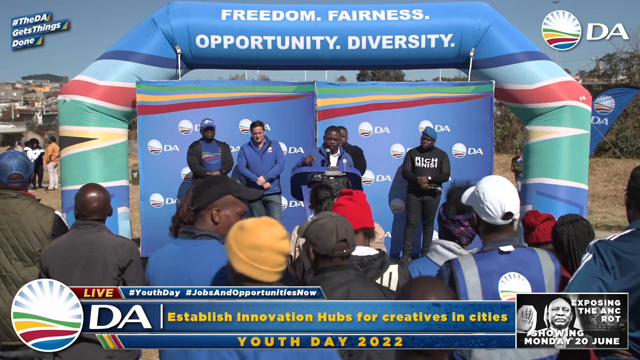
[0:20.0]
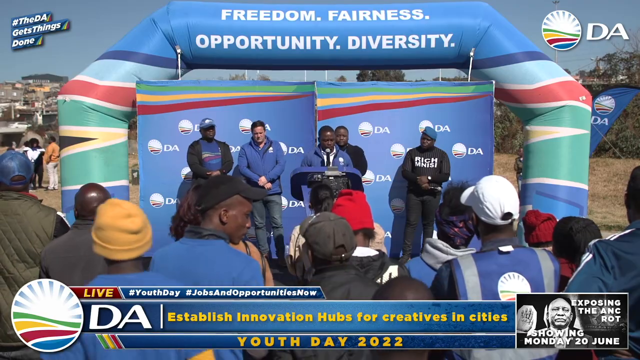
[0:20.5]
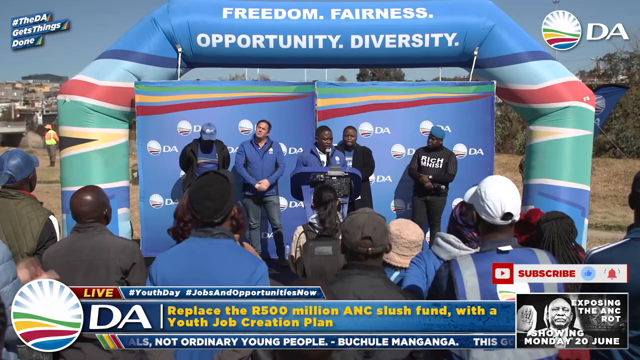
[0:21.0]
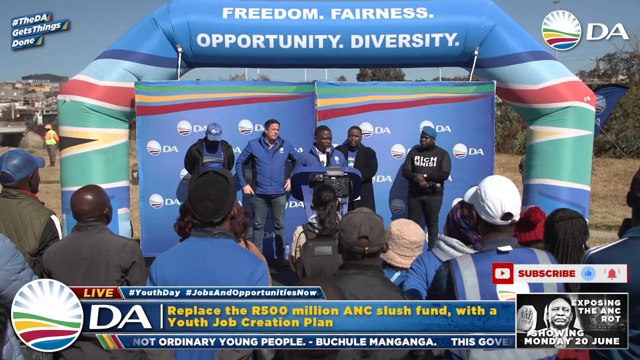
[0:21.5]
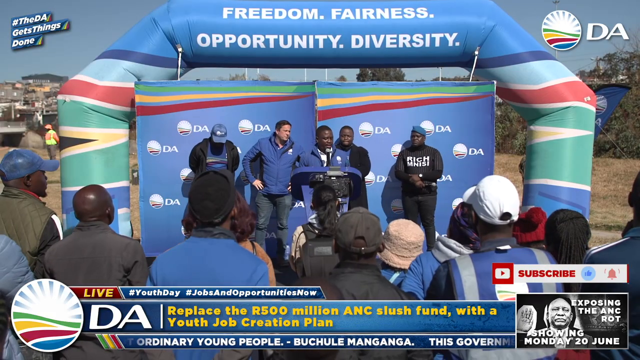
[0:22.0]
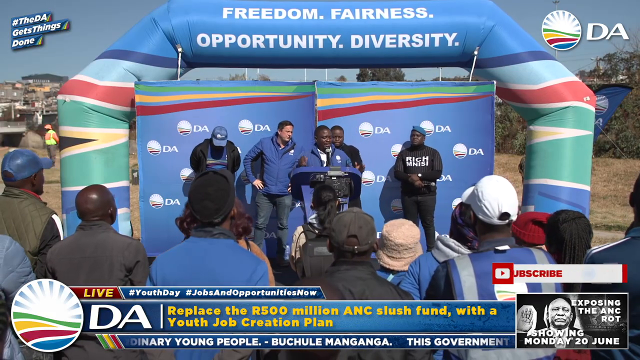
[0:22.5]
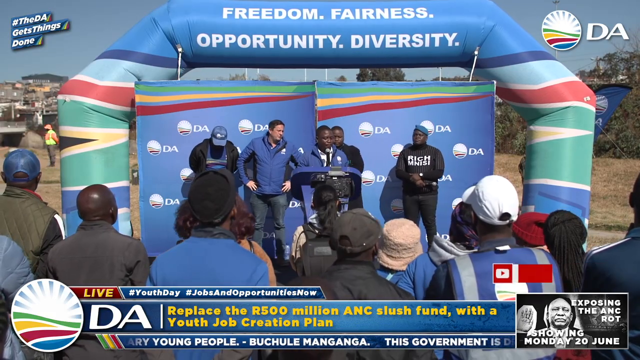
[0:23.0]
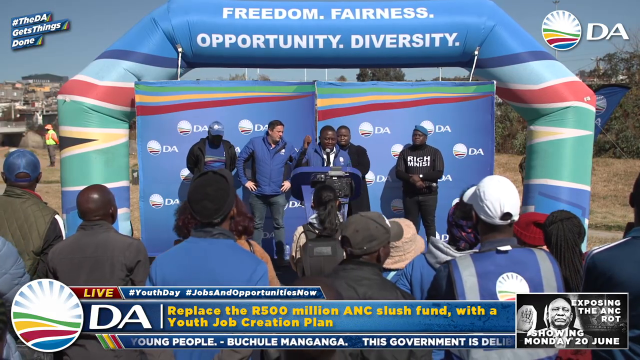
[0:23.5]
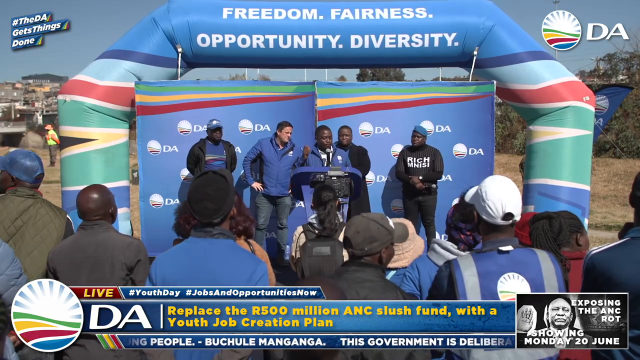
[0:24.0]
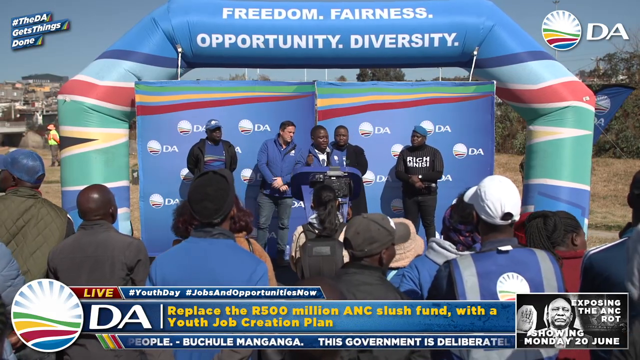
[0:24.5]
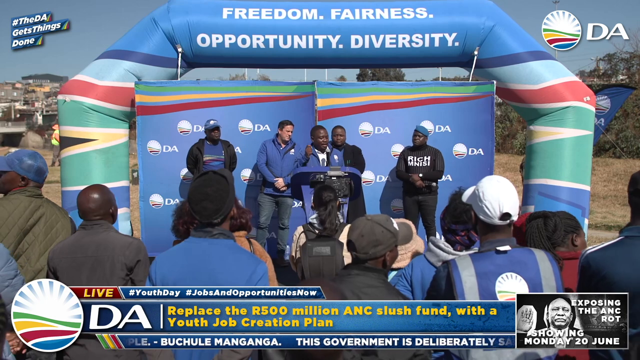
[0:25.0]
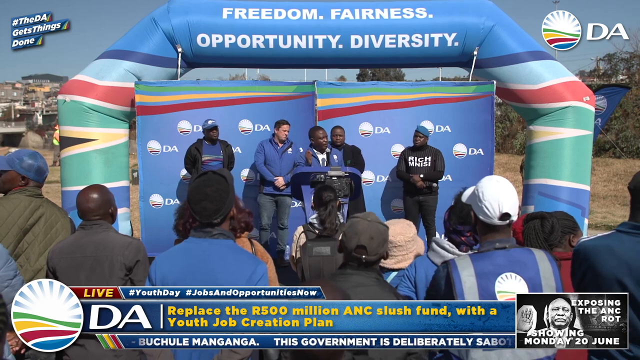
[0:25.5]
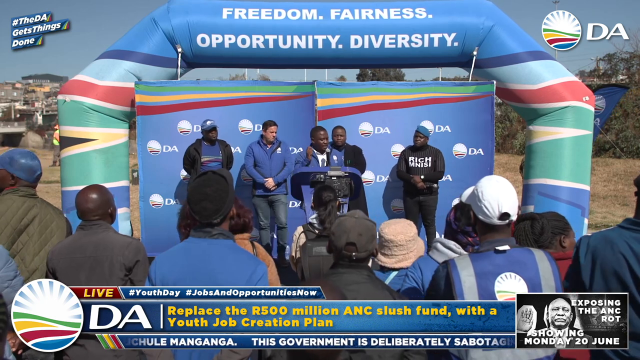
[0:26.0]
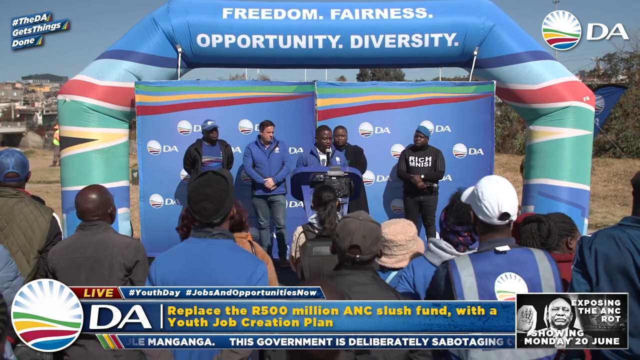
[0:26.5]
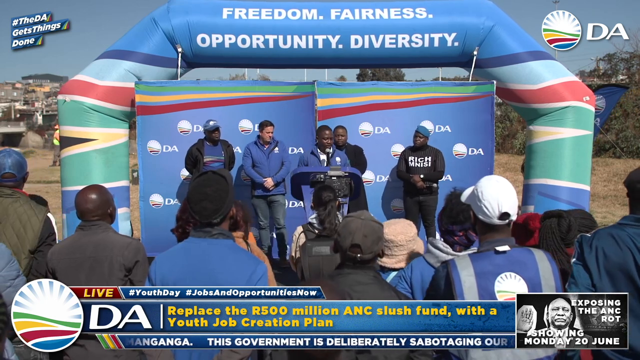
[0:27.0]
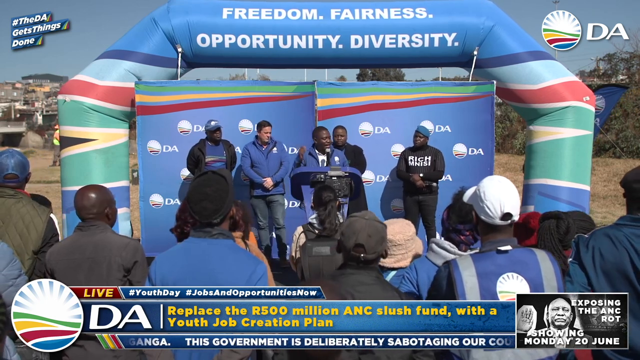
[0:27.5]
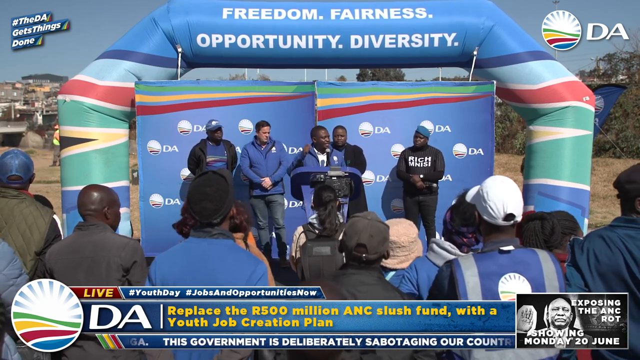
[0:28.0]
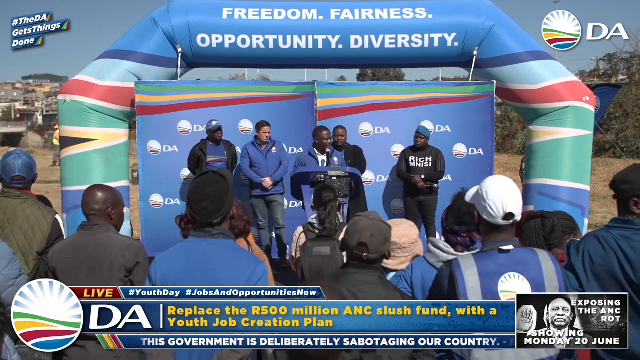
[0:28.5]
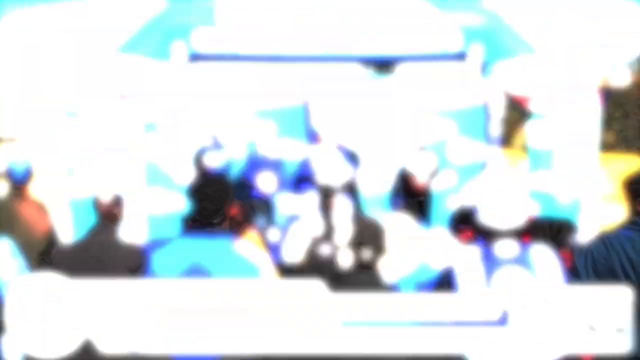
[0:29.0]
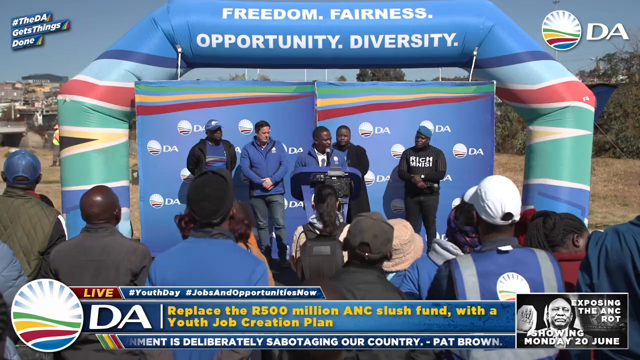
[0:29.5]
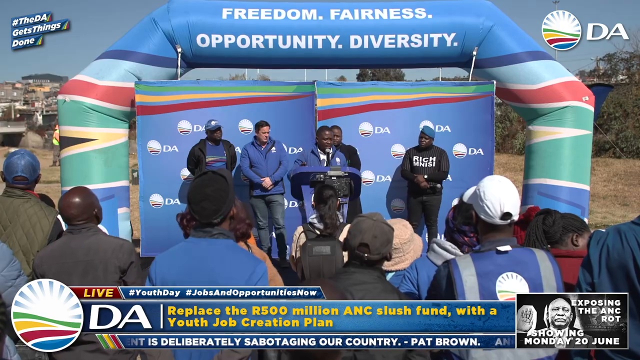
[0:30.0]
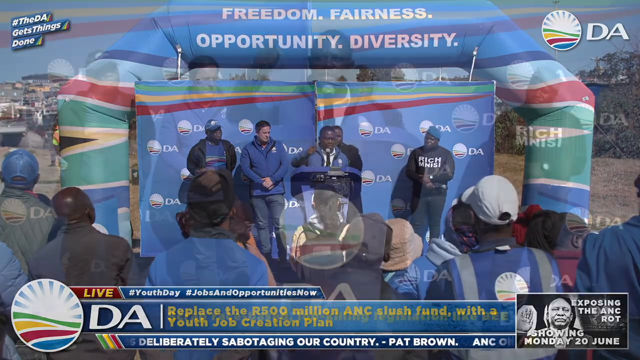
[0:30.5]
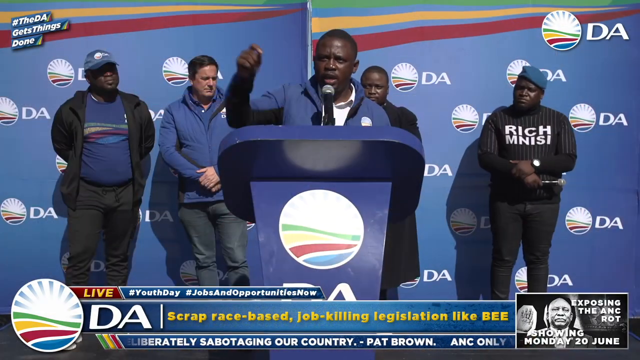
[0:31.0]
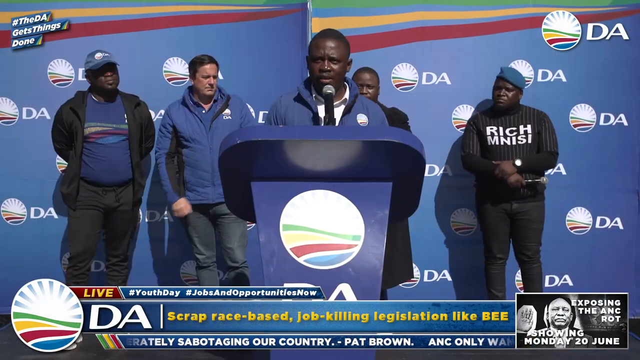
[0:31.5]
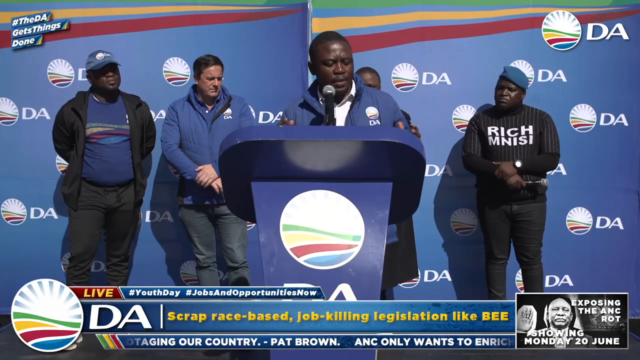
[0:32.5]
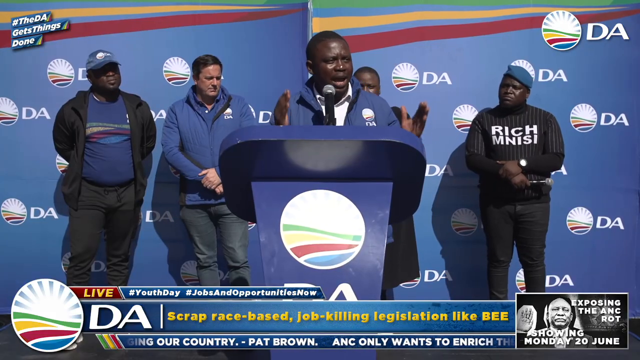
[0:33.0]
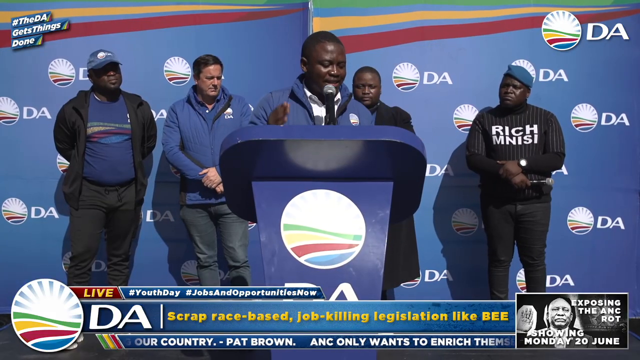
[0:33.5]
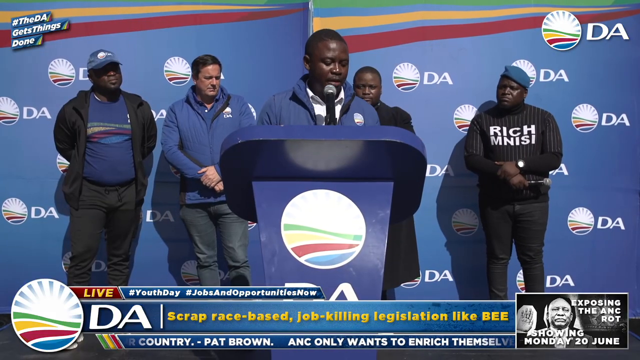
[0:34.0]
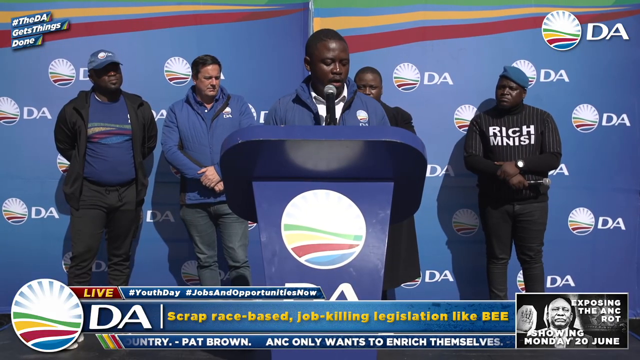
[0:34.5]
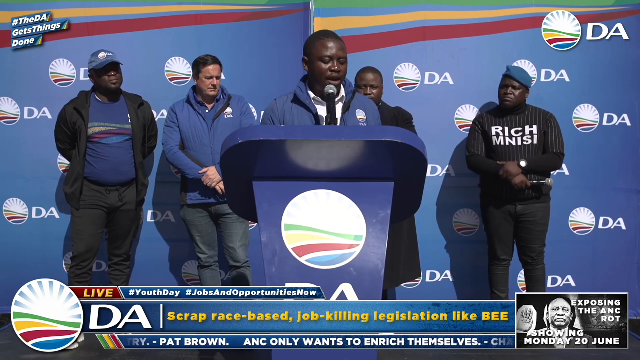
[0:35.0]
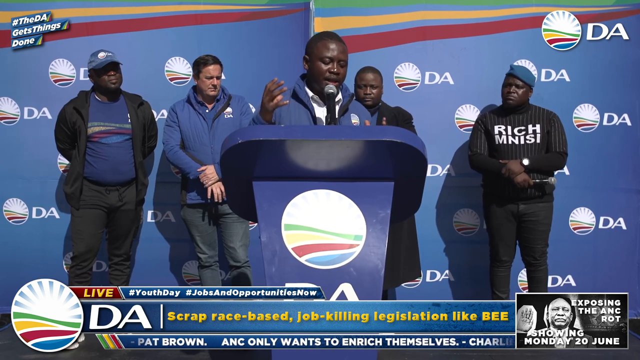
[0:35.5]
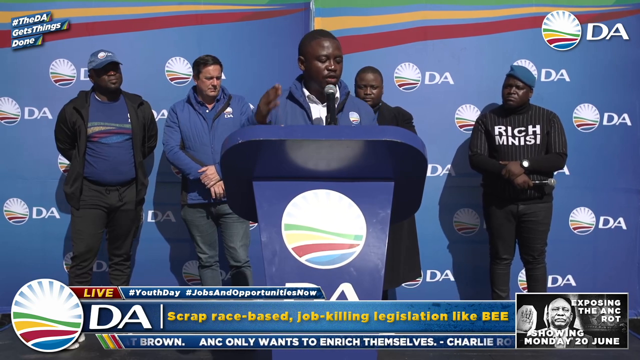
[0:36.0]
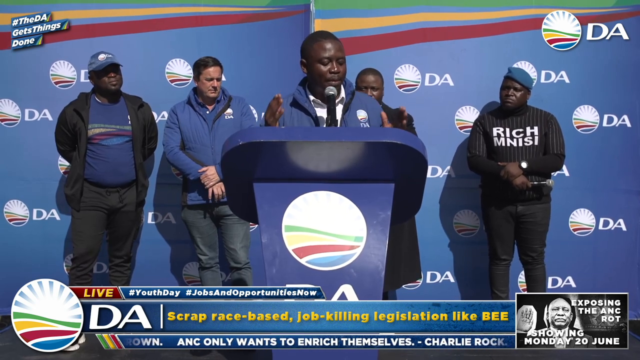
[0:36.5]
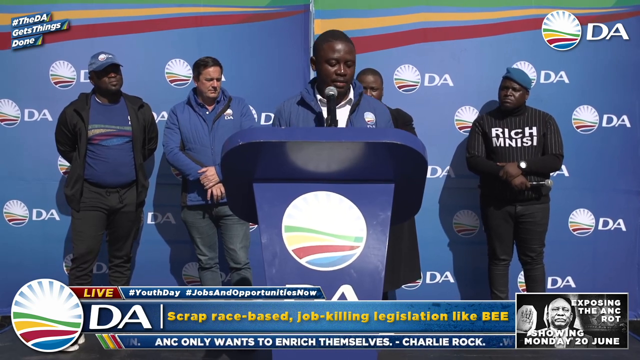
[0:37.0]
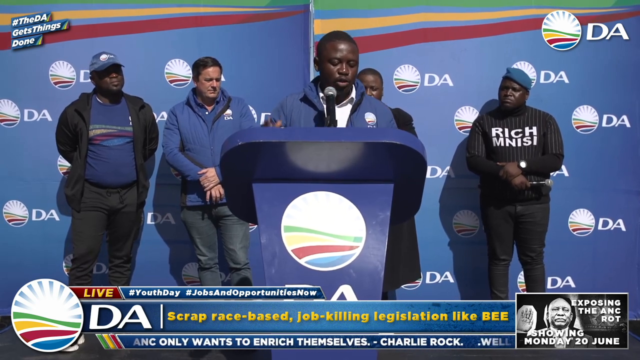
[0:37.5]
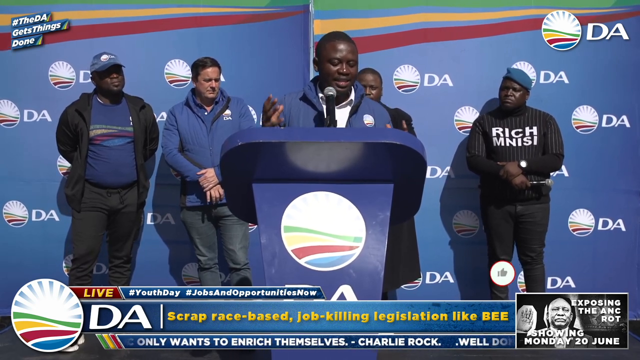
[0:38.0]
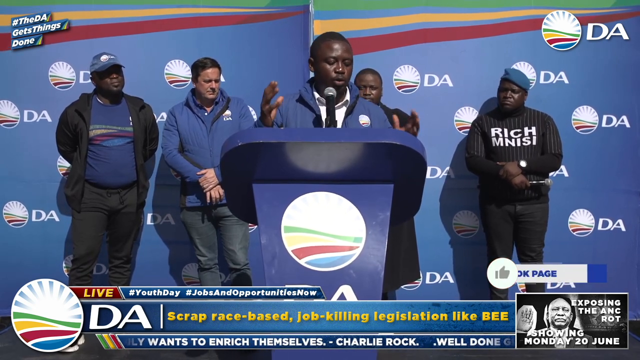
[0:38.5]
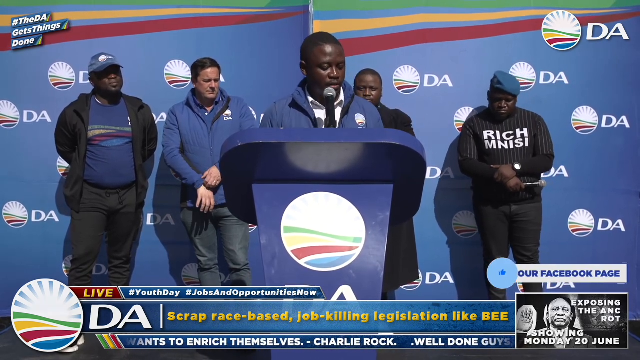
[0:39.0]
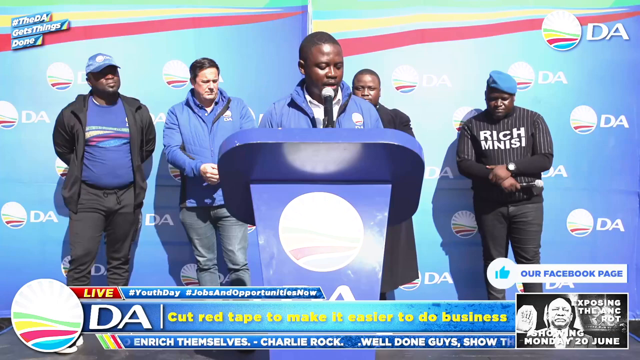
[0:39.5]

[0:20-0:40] The speaker continues, repeatedly making a hammering motion with his left fist. There are frequent white-out transitions, and the speech seems to be clipped here and there for brevity. The video returns to a close-up of the speaker. Four people stand behind him, watching him give his speech. On the left is a man in a blue baseball cap, blue t-shirt, black sweatshirt and black sweatpants. Next is a man in a blue puffer jacket and dark jeans, and almost directly behind him but to the right, barely visible, is another man who looks like he is wearing a long black coat. The man on the right wears a blue beret, a black striped shirt that says "Rich Mnish," and black jeans. The same multicolored hill appears on the podium, in blue, red, yellow and green.